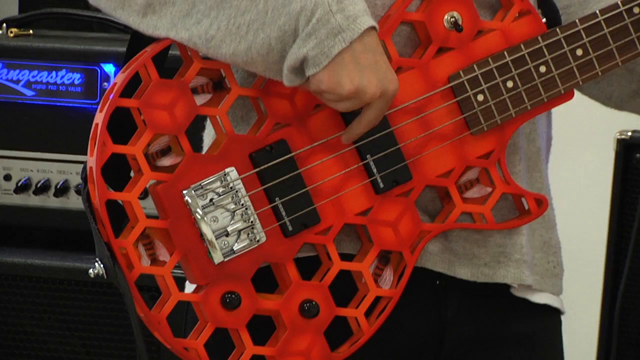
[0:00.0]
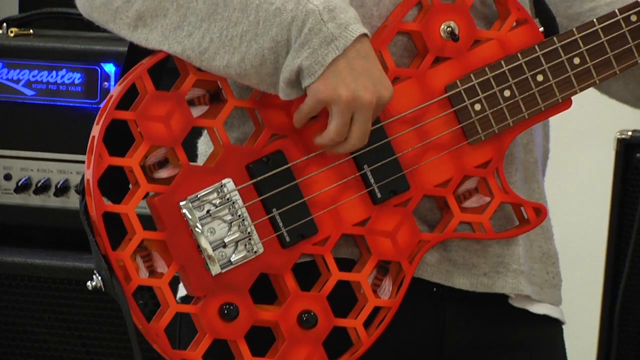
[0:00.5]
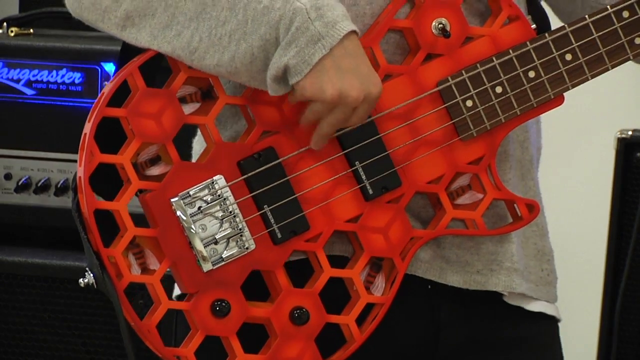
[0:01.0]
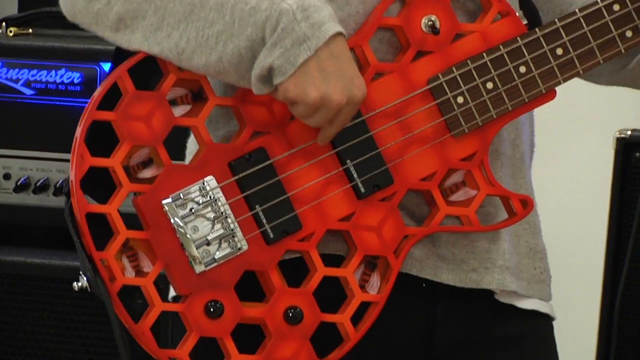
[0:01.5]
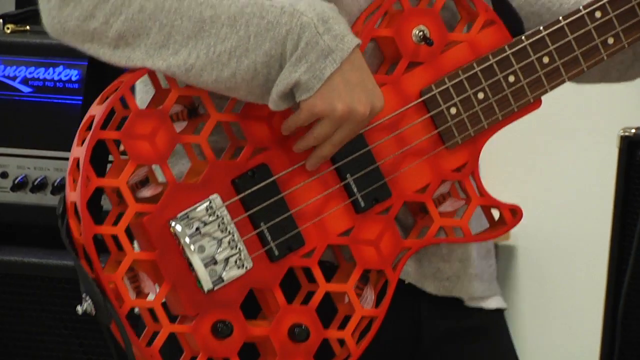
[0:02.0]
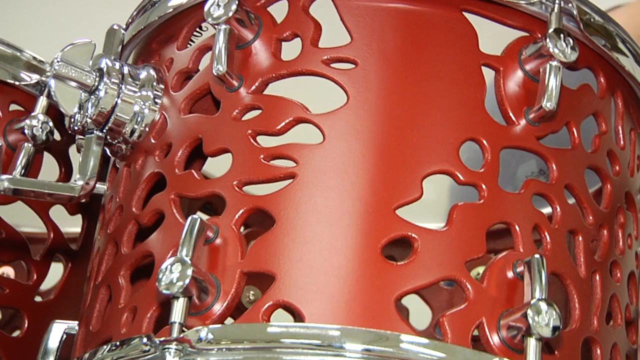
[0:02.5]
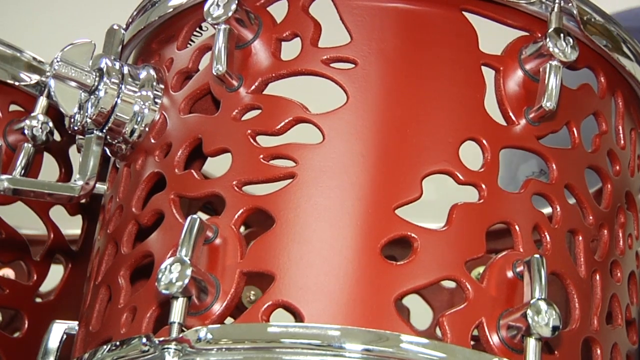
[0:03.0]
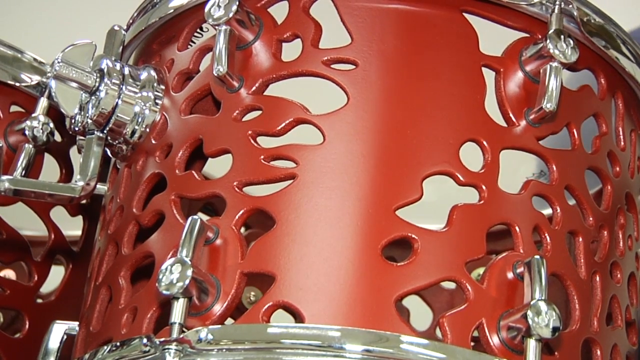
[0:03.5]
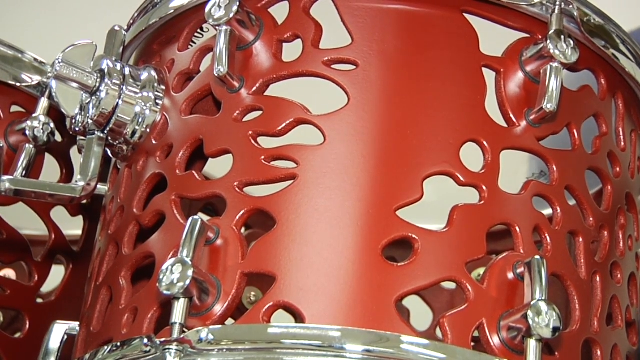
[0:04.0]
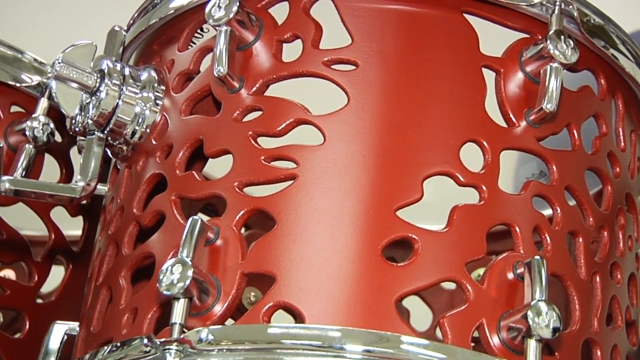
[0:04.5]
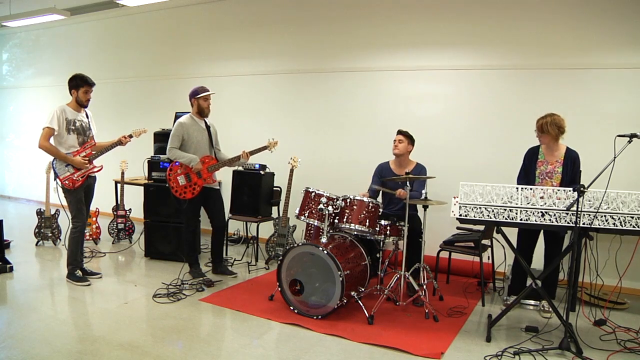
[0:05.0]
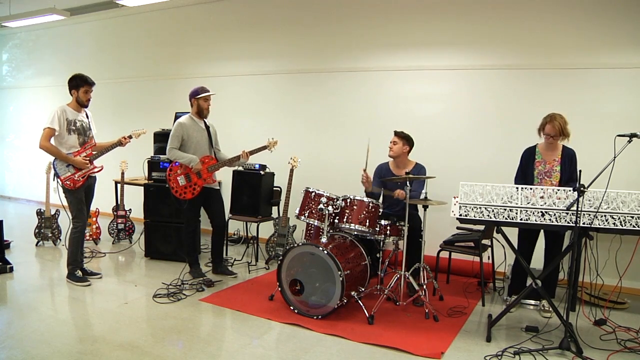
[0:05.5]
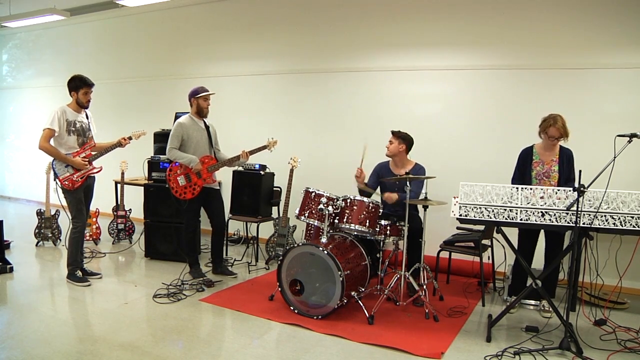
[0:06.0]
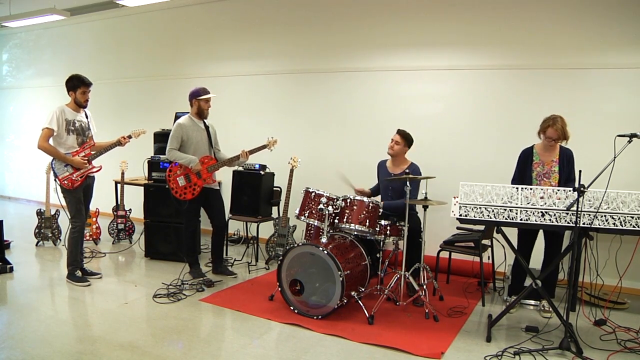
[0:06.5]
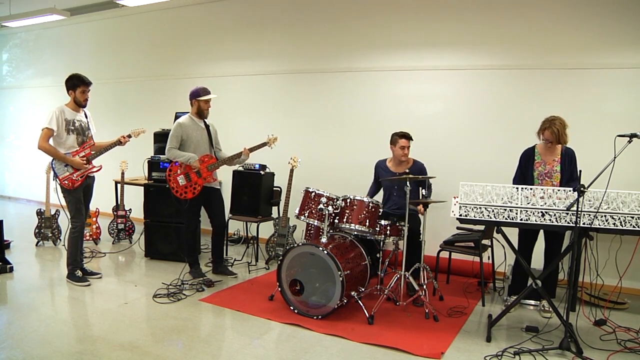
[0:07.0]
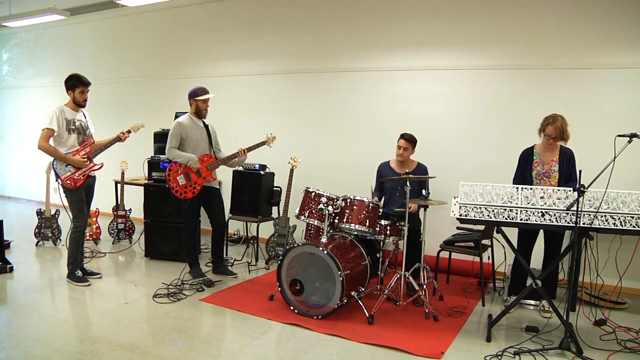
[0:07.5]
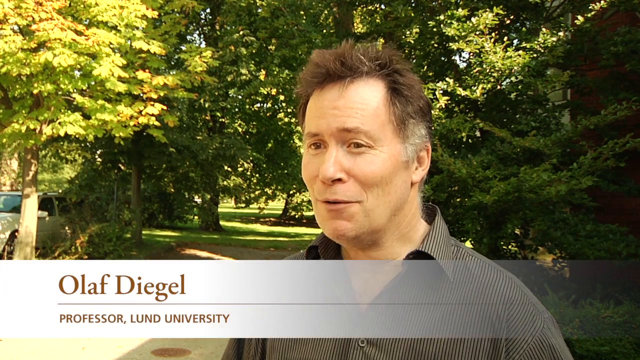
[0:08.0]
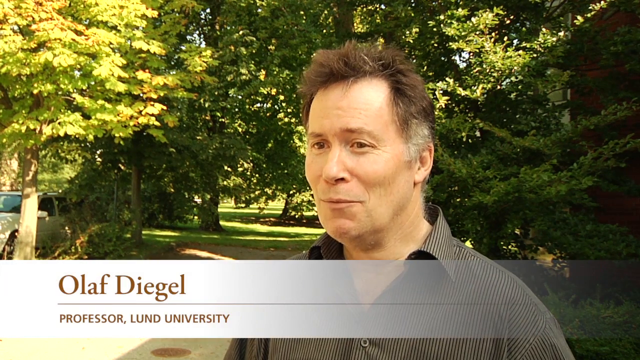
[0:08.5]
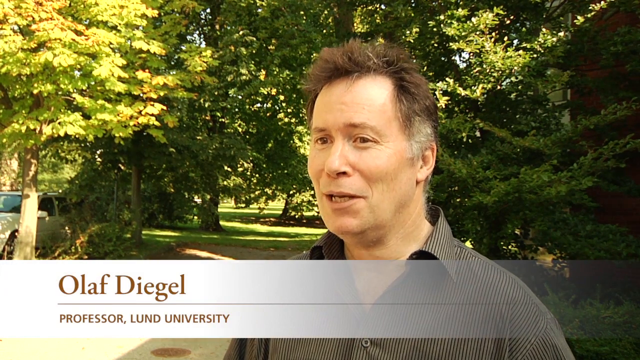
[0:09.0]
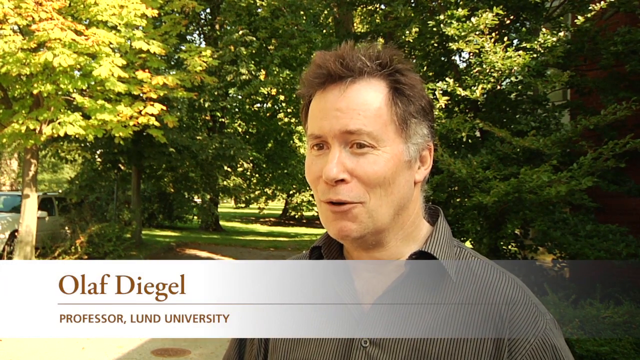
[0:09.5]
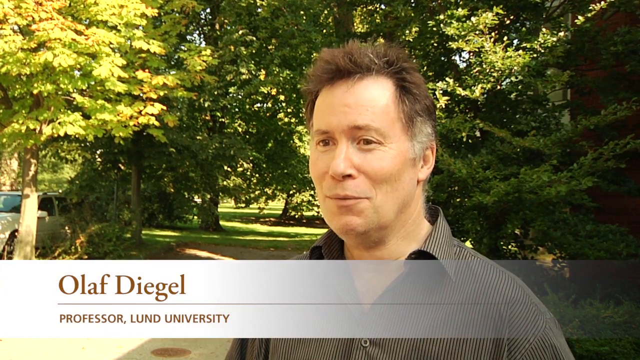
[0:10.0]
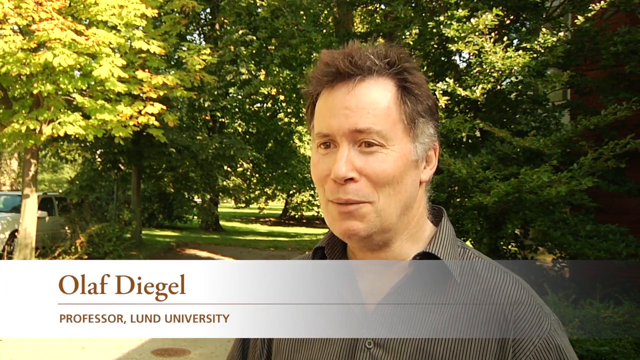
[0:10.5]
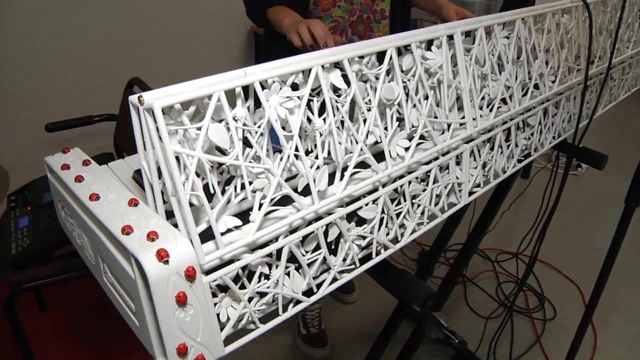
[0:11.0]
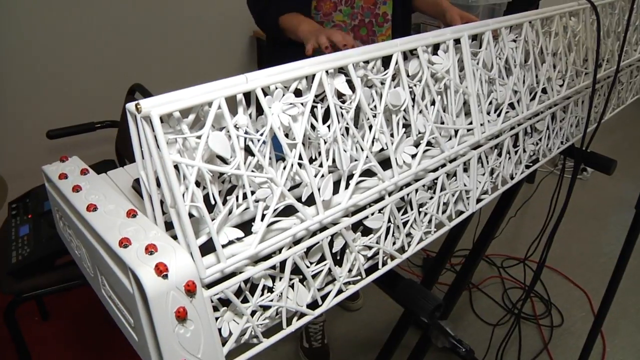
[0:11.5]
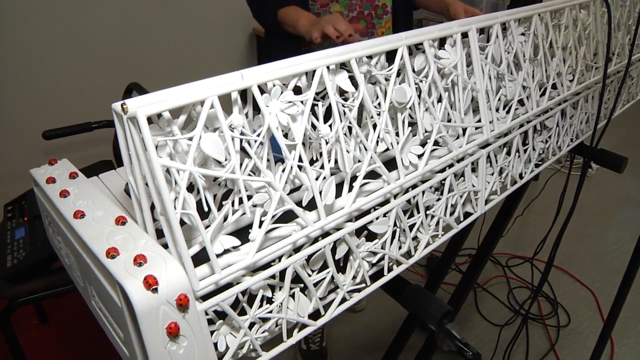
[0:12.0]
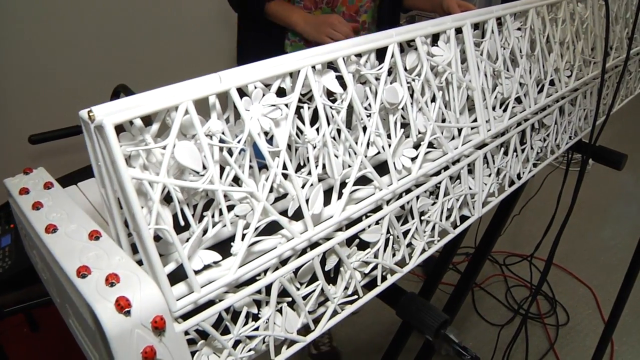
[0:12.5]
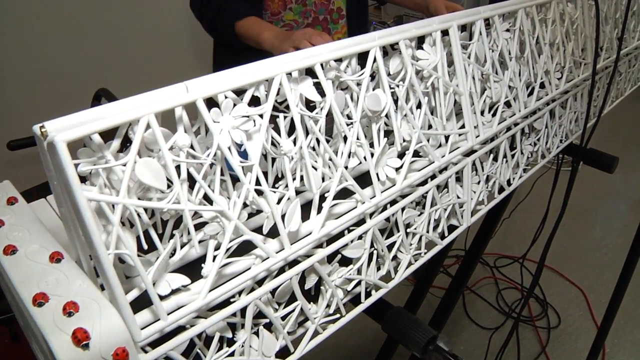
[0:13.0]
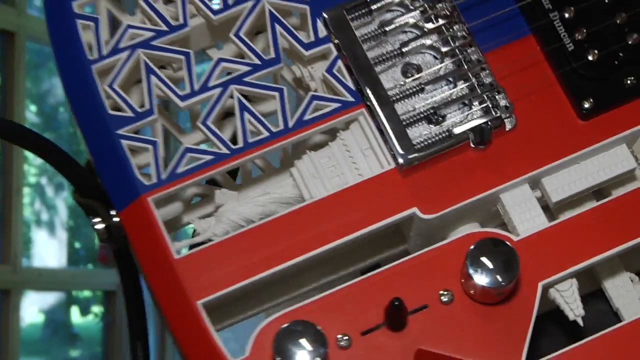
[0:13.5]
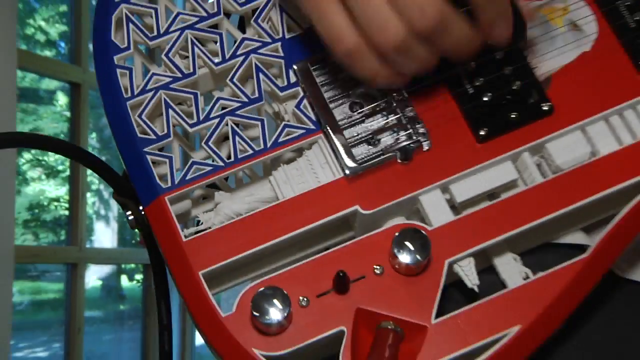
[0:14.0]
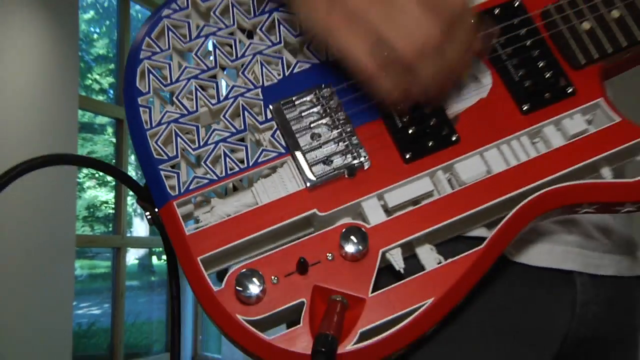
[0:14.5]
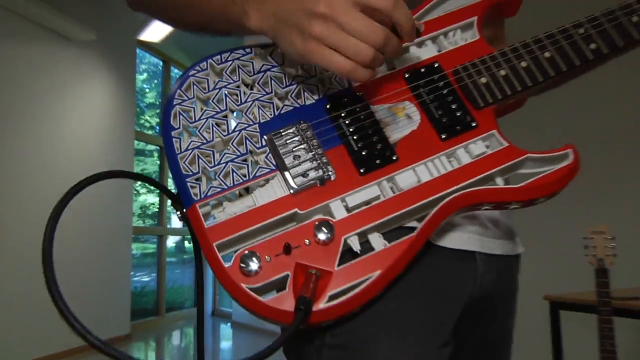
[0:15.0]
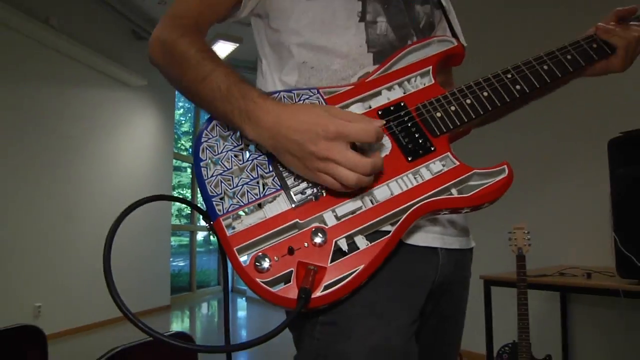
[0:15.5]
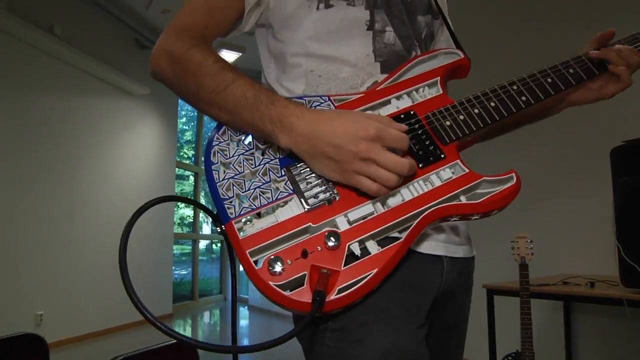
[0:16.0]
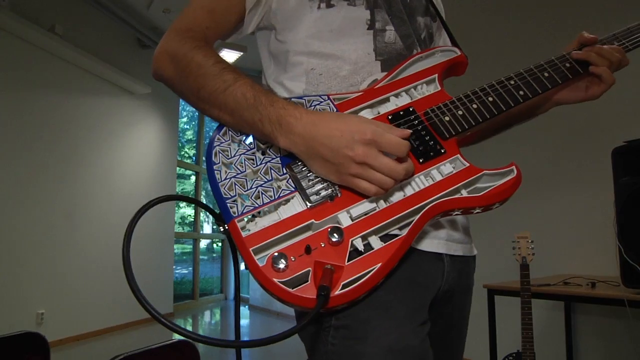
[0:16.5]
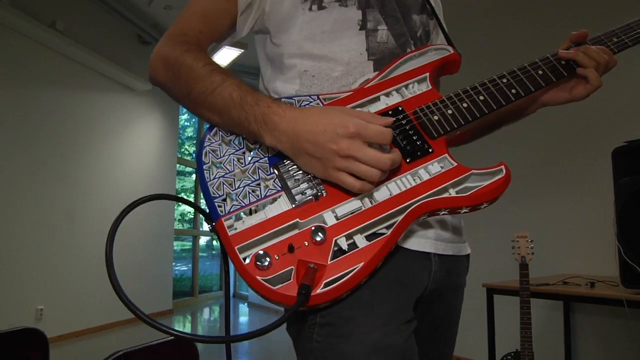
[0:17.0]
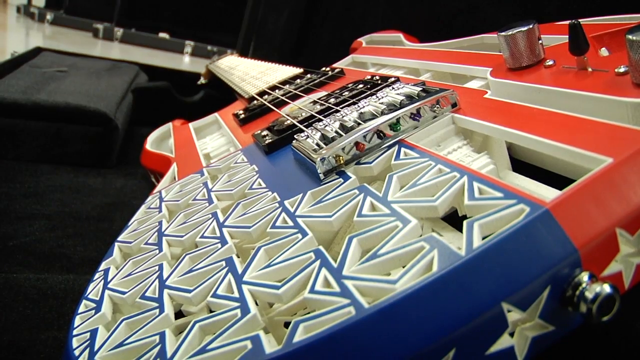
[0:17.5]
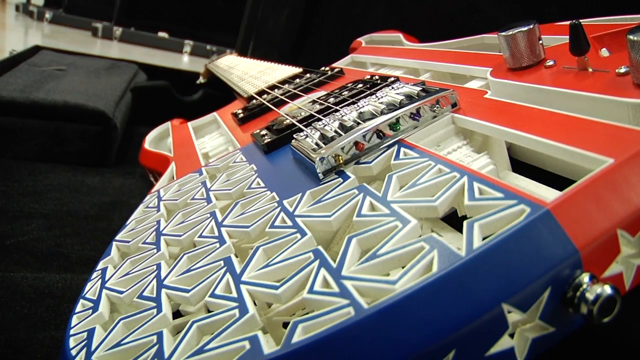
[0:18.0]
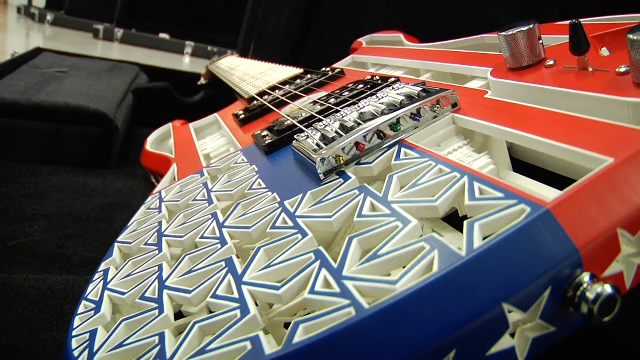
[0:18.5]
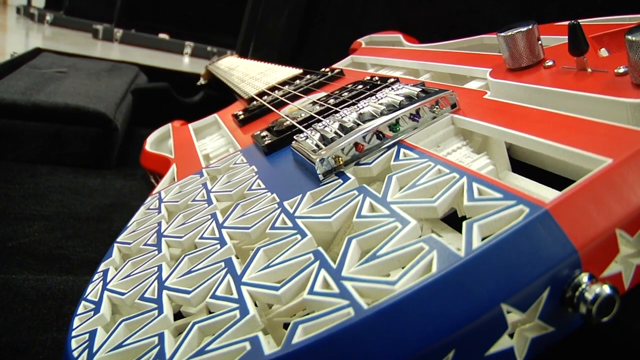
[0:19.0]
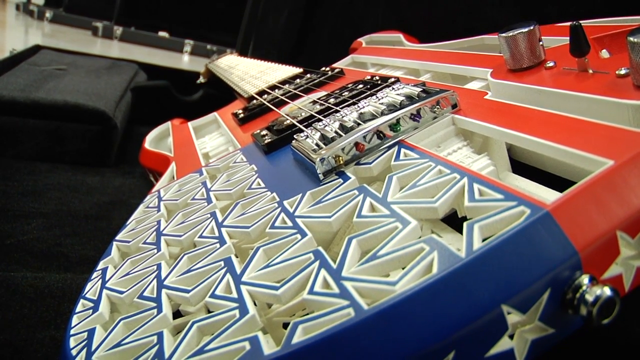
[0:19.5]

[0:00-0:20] A close-up shows a red guitar with a very unique design: it looks plastic, with a woven, mesh-like pattern of holes in it. A drum with the same look appears briefly. The scene moves to what looks like a little indie band playing in some kind of building, possibly a garage. The band is three young guys and a girl, probably all in their 20s. A red rug is underneath the drummer, who sits at what looks like a typical dark red drum set. The young lady stands and is probably playing the keyboard; the keyboard itself is not visible, but its backing has the same hole pattern as the guitar. The guitarist from the opening close-up plays with the guitar strapped around his torso, and another guy plays another guitar a little behind him. Other guitars are on the floor, along with speakers, equipment and plug cables. A man named Olaf Diegel appears; he seems to work at a university. The video returns to the students playing and the different guitars with their unique design. When the professor is speaking, his name appears with "Professor Lund University" underneath it. He stands outside in an area with a lot of trees around. The guitars are shown afterwards.